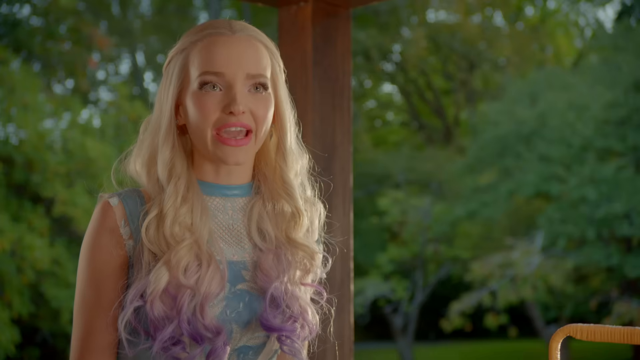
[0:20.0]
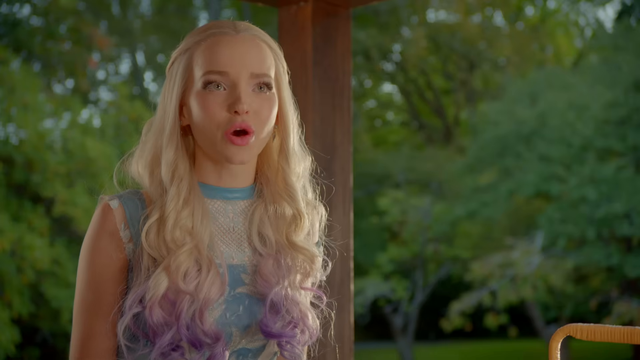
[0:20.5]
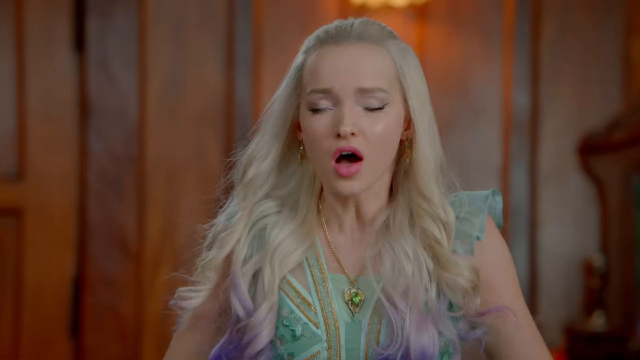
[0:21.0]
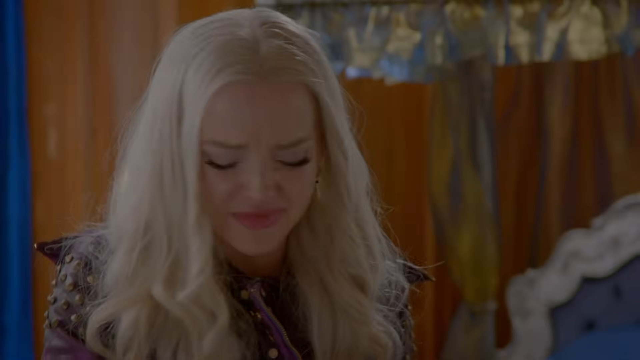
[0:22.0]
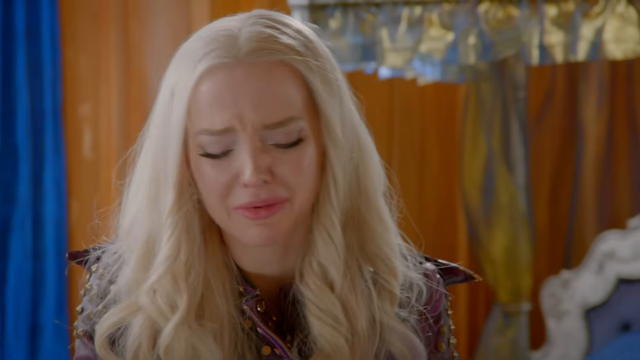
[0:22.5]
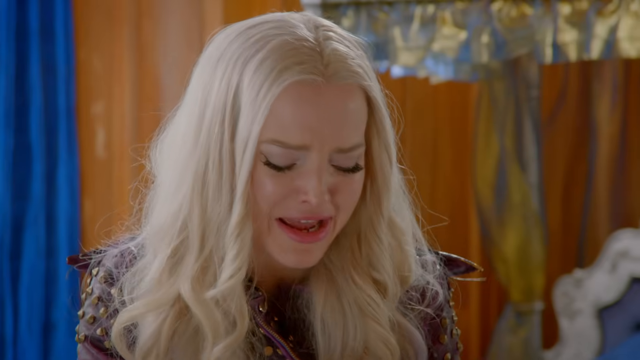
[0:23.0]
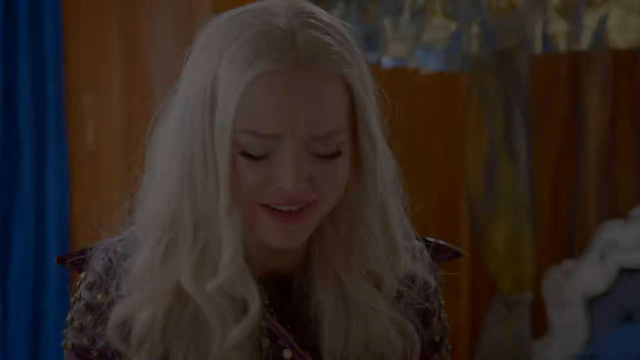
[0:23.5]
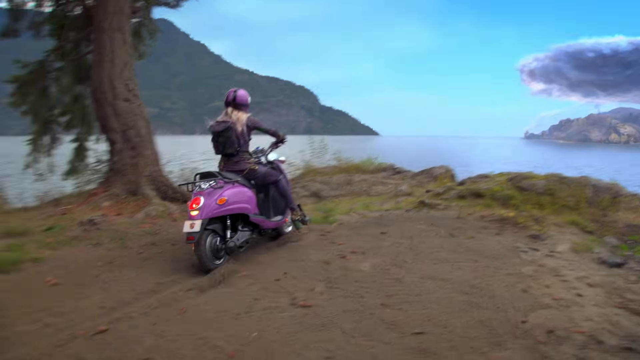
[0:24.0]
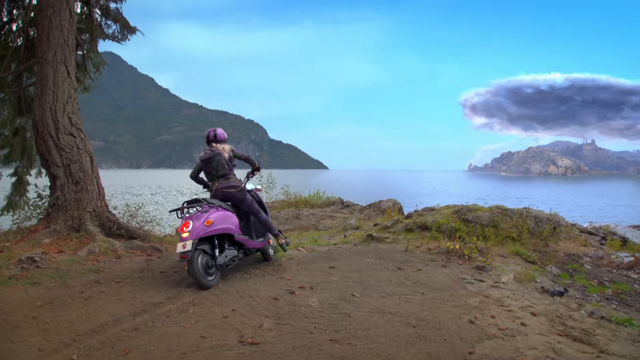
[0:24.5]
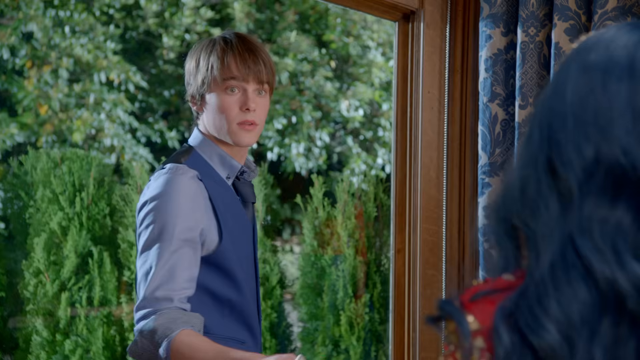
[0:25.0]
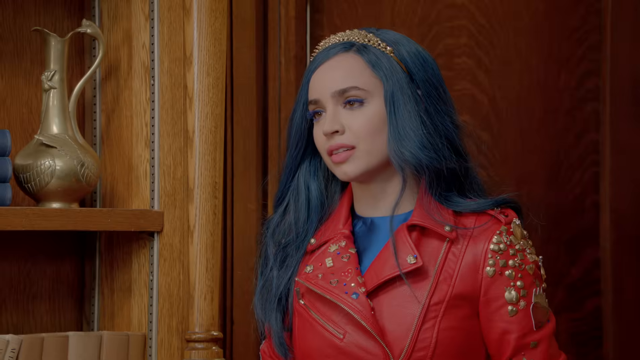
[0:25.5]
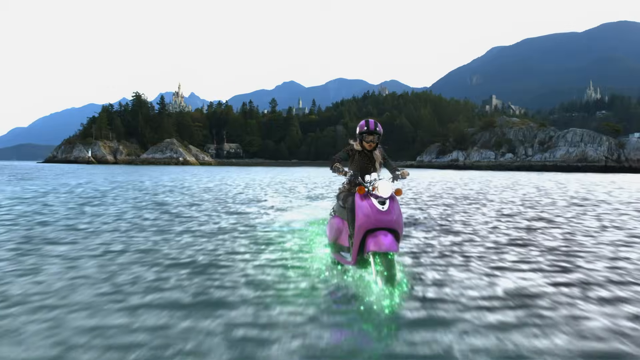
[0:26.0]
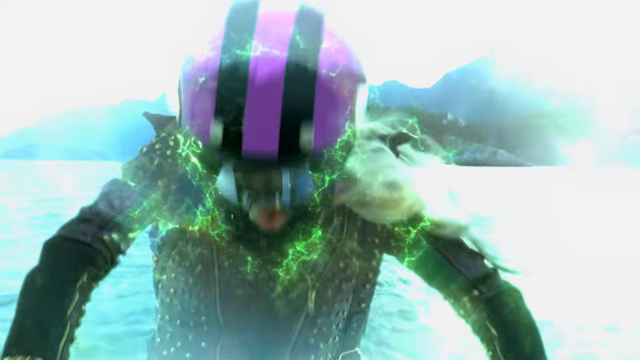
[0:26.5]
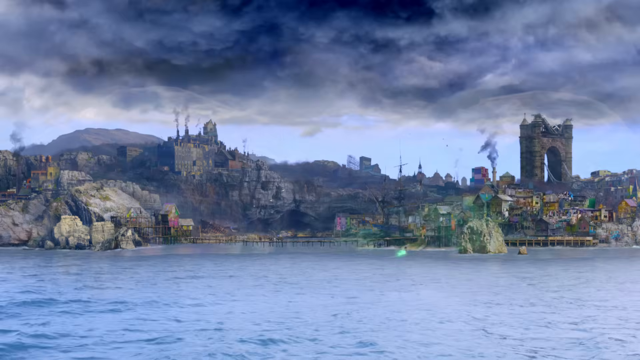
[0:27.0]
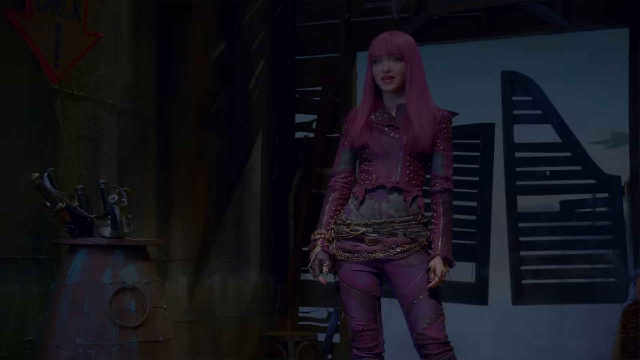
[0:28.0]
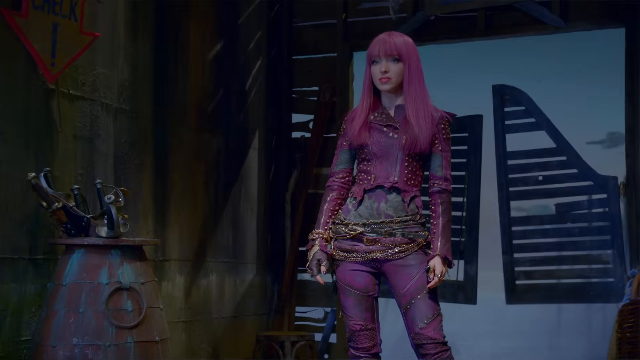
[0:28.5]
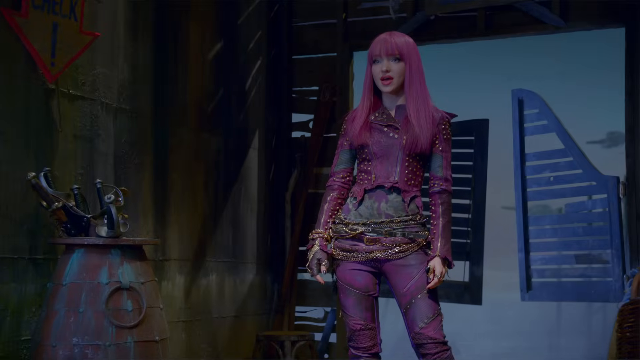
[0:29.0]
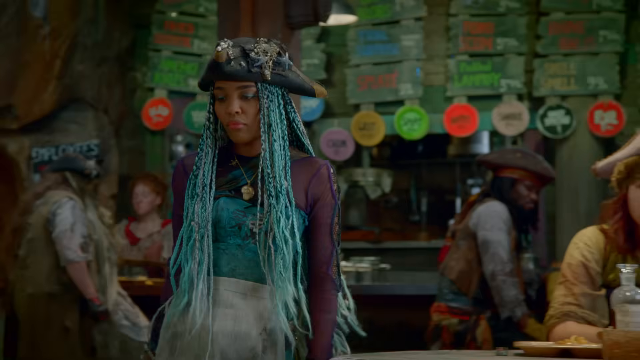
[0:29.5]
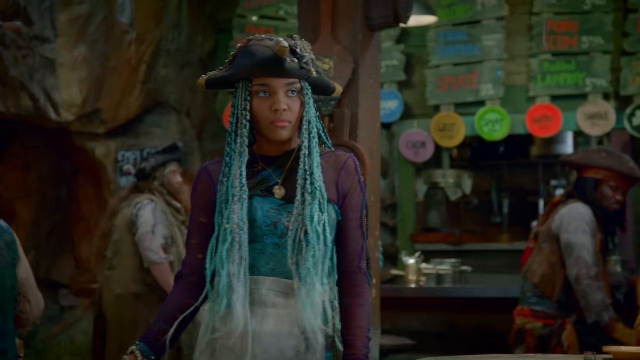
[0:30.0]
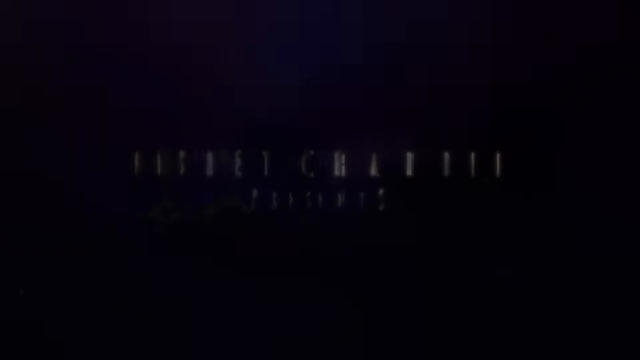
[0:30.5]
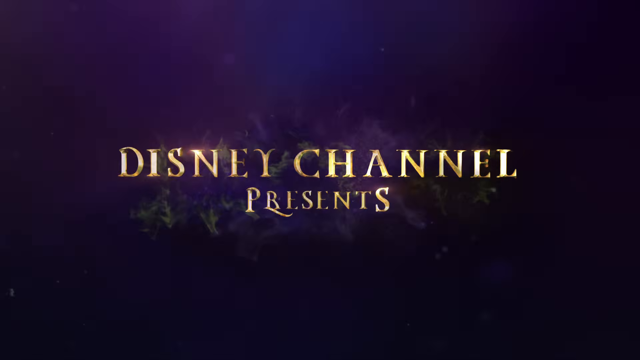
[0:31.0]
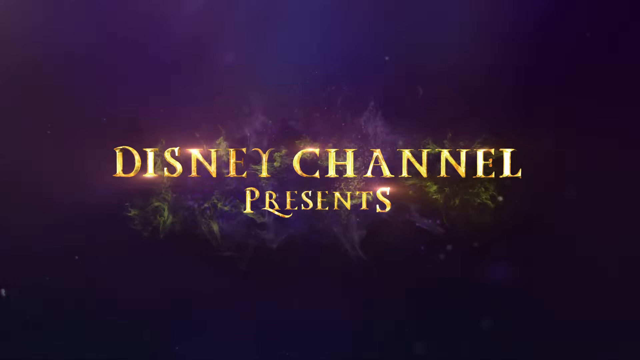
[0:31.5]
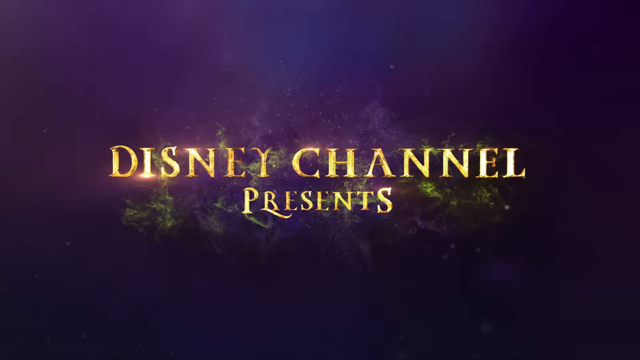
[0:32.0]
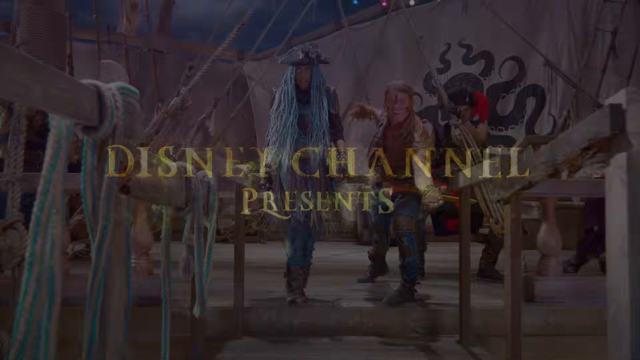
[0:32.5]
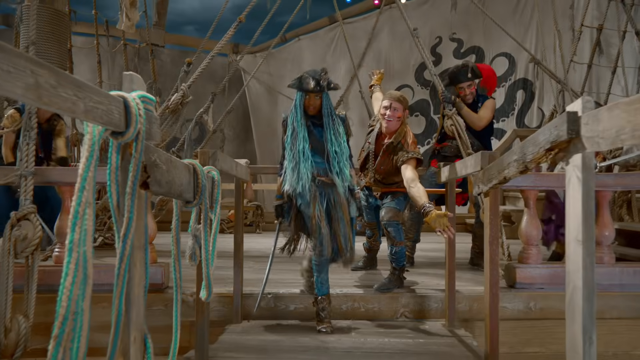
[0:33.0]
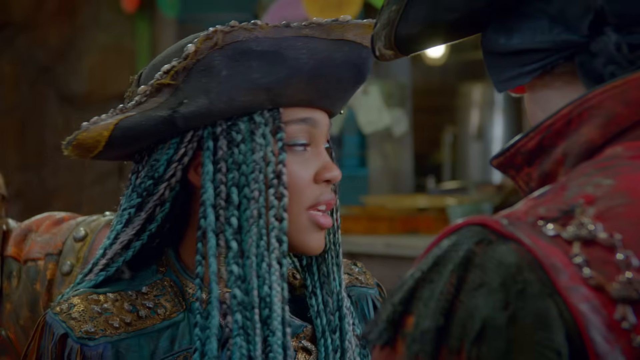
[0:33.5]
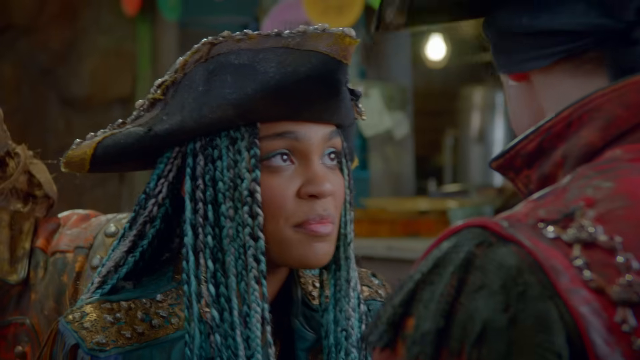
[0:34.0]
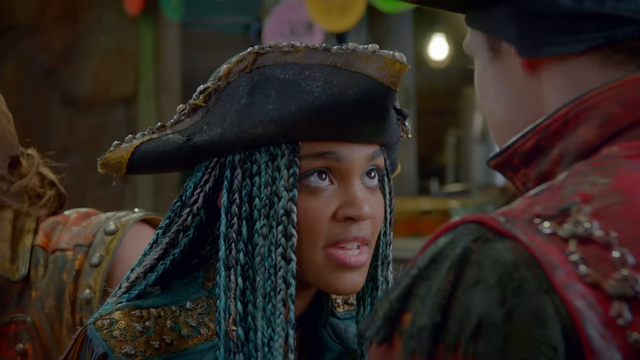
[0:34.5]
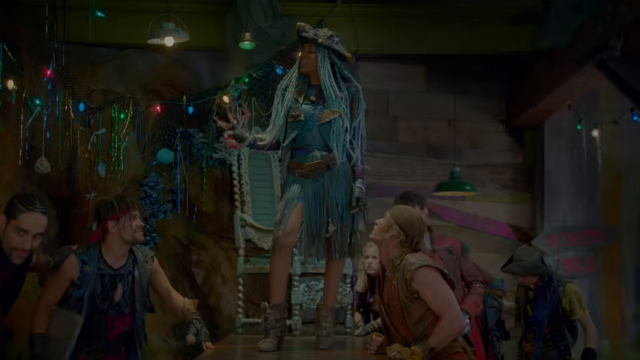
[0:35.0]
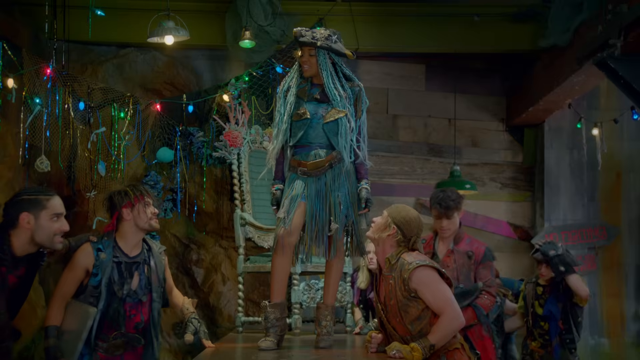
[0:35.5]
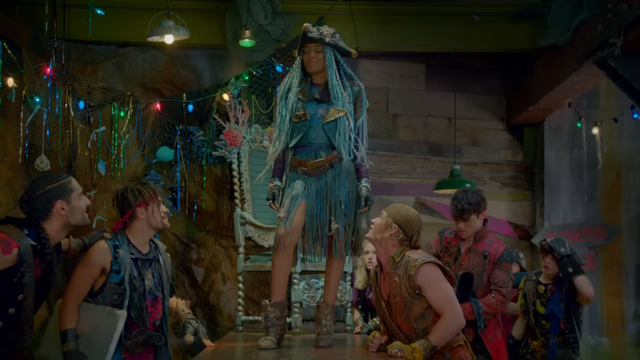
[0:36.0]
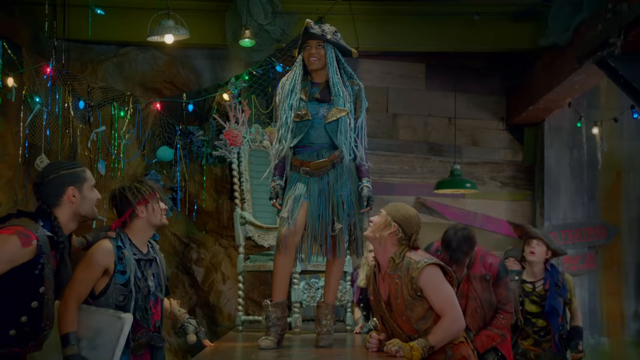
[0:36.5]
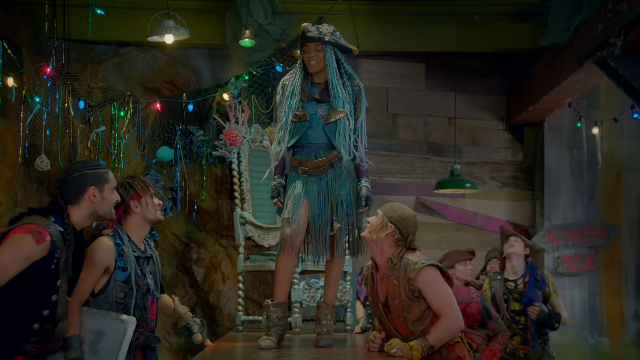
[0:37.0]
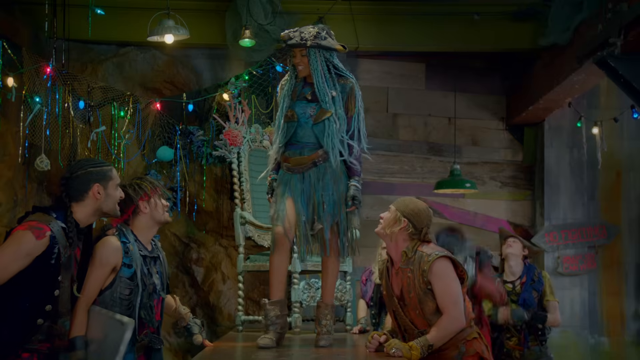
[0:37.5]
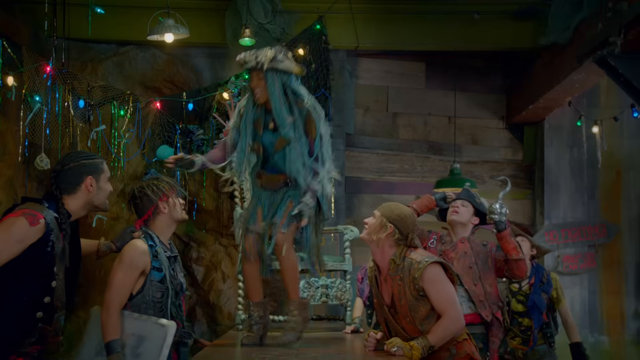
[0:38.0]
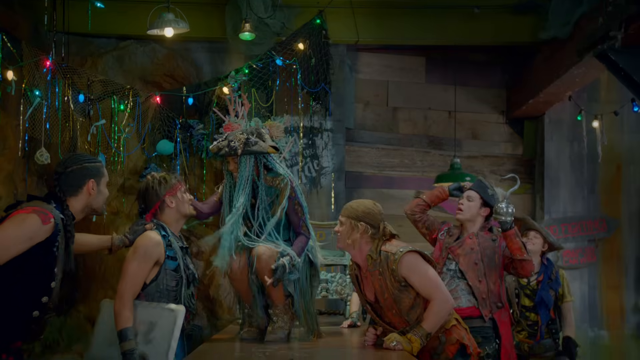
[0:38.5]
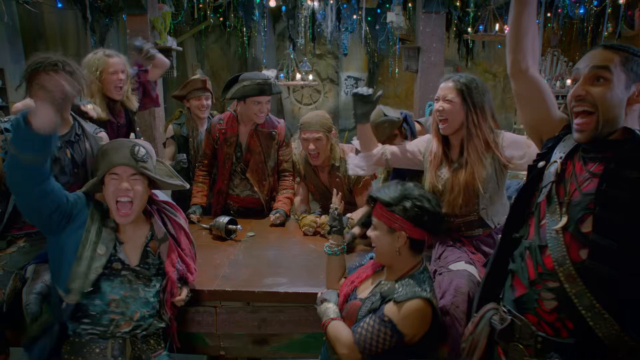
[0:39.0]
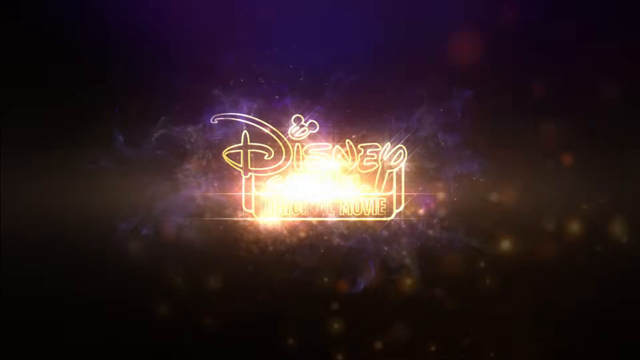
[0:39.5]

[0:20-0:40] The young woman is quite upset; she looks very overwhelmed, as if she has been crying and yelling. Her eyes are turning green, and she almost looks like she is hyperventilating. She rides her purple moped up to a hill and then across water. It is almost as if things change and she enters a different place. She comes up with purple hair, and the text "Disney Channel presents" appears. A woman with purple hair and turquoise hair is shown, and the text "Disney Channel" appears. The place looks like a totally different land from the one she came from; everything looks different.